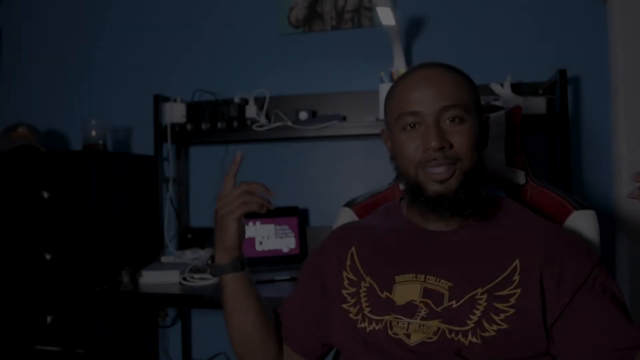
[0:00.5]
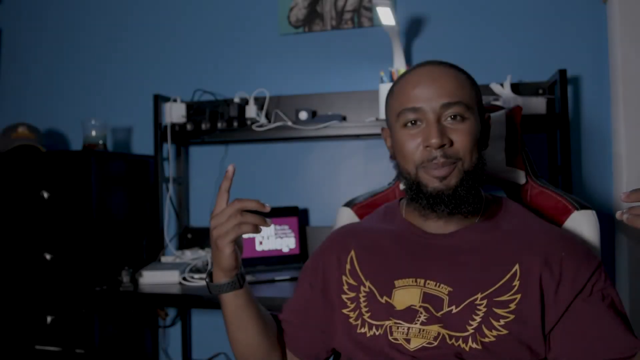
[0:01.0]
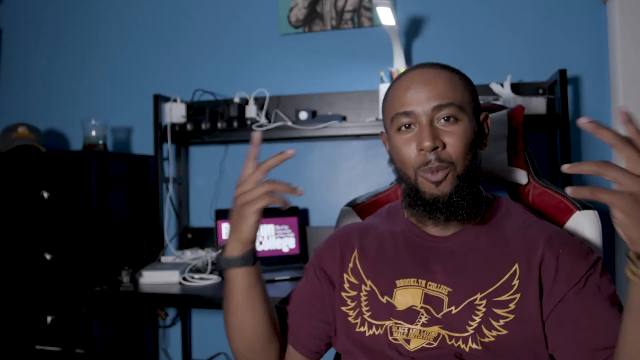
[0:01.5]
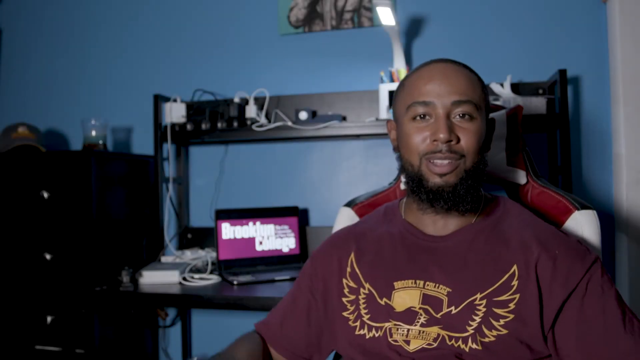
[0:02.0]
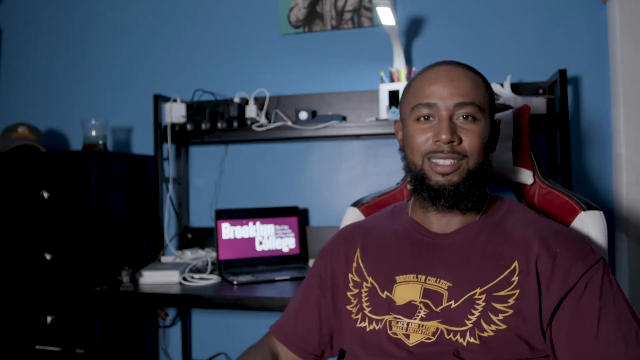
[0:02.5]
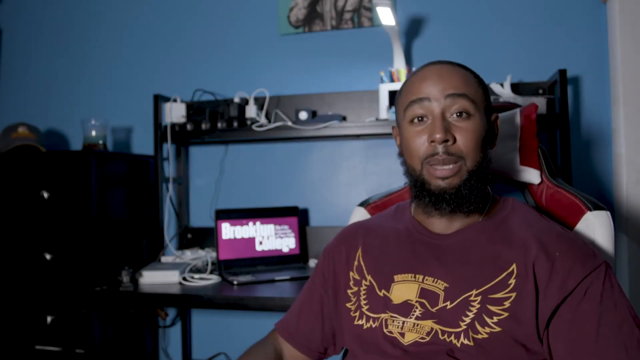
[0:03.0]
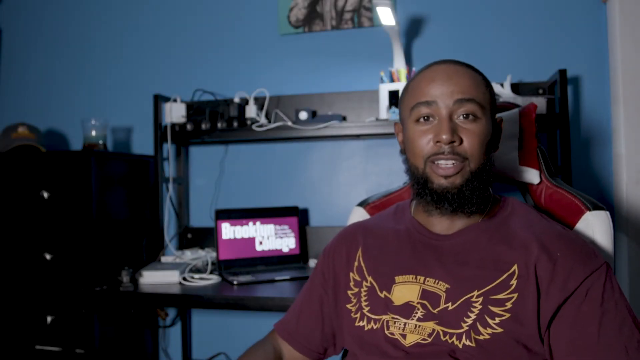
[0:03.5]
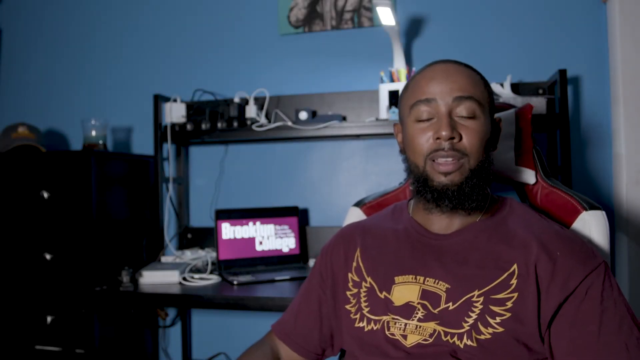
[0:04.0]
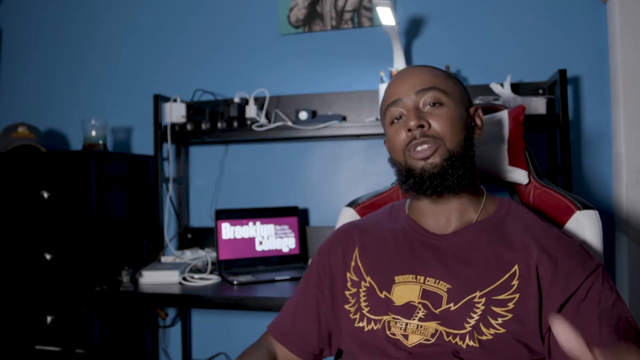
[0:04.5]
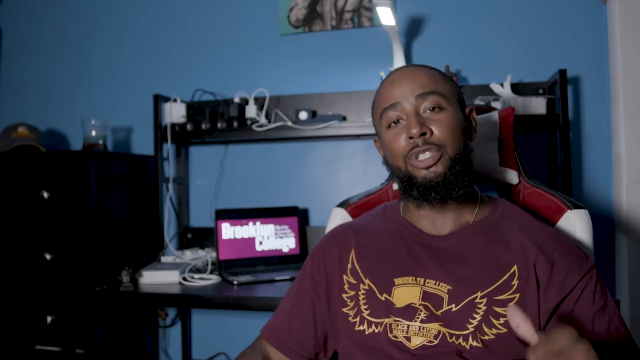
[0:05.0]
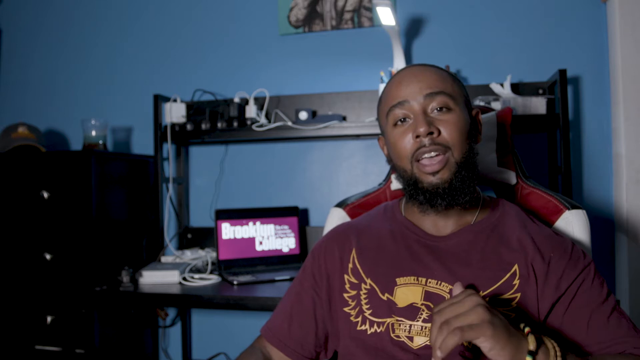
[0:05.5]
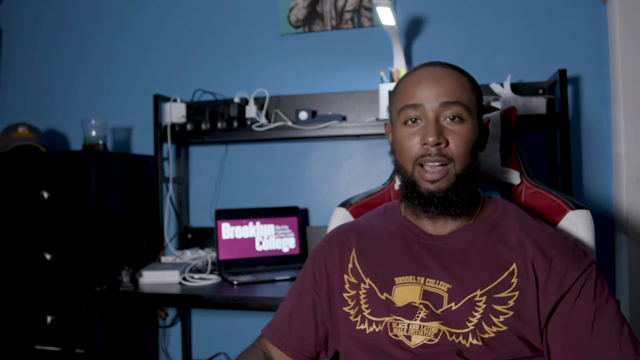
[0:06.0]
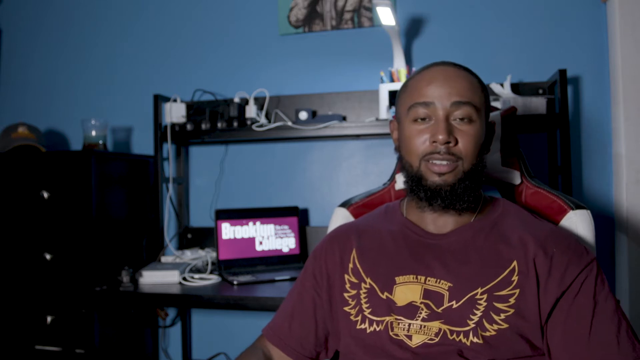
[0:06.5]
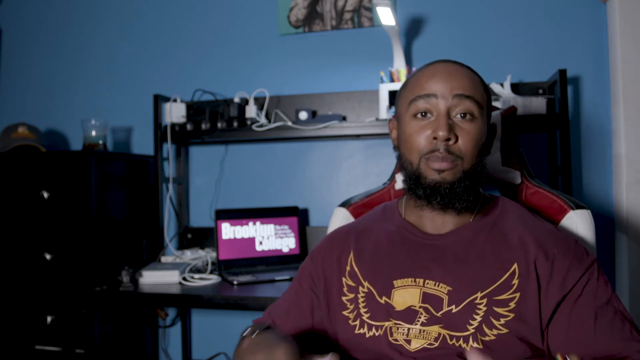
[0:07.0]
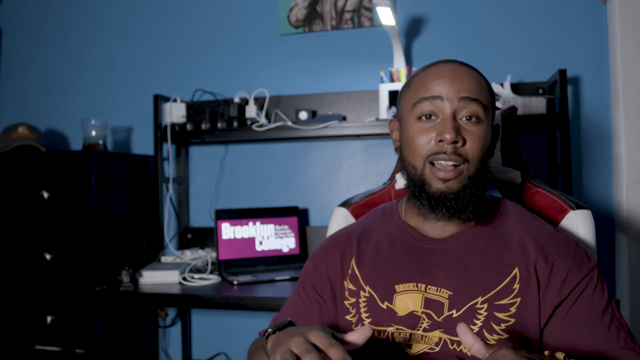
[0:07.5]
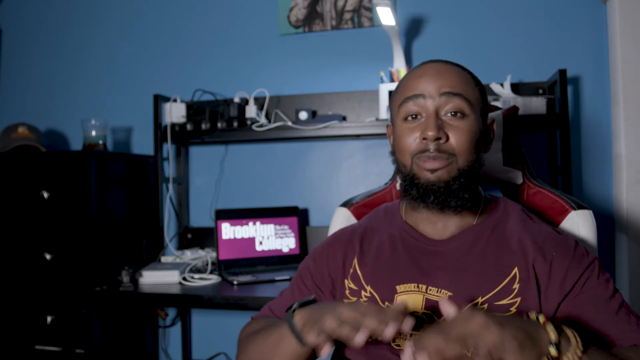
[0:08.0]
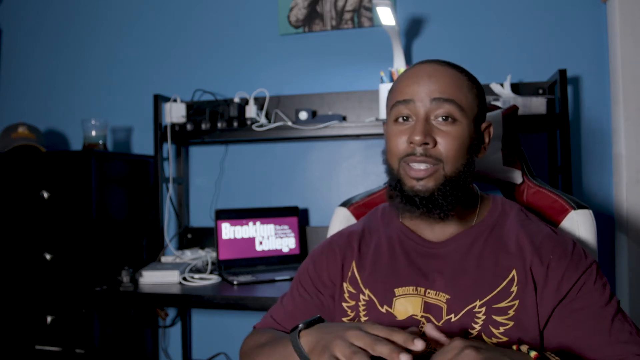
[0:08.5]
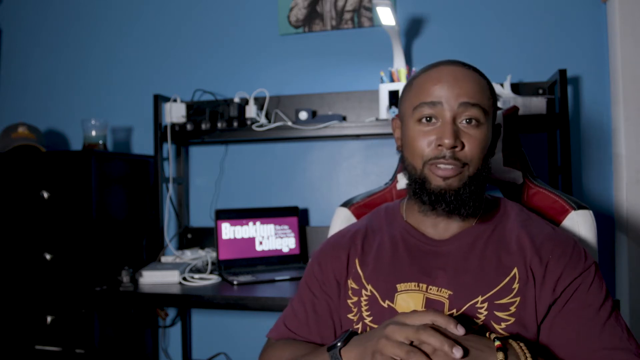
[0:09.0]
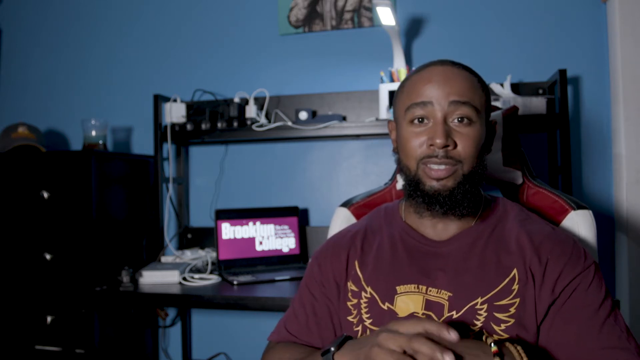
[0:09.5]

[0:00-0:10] At the very beginning, a man appears to be giving an introductory-style speech. He is off to the right of the frame, sitting in a chair that looks black, red, and white. In the background his laptop is open, showing very large text reading "Brooklyn College" on a maroon background or wallpaper. The man seems very chill and laid back; he has a black beard, wears a maroon shirt, and looks pretty buff.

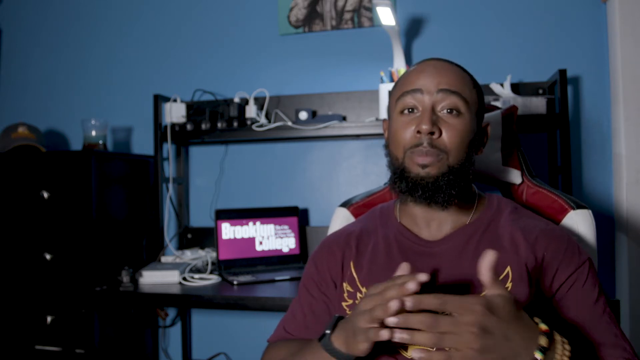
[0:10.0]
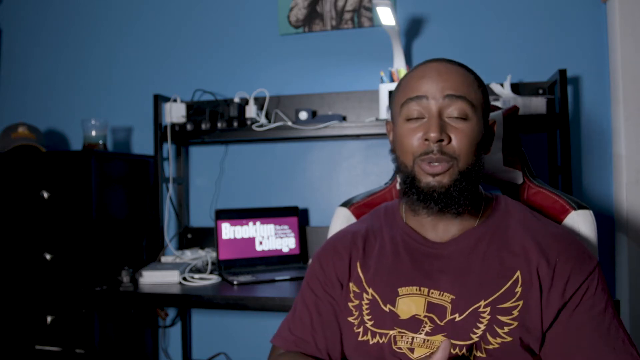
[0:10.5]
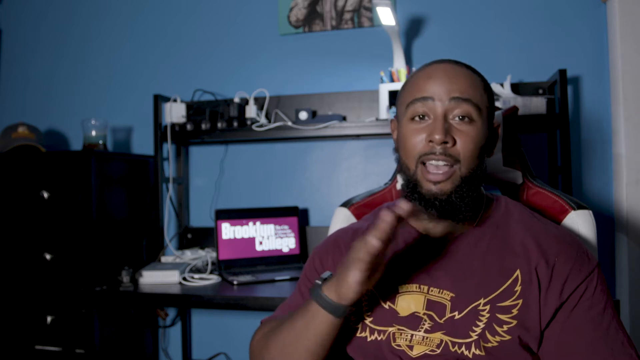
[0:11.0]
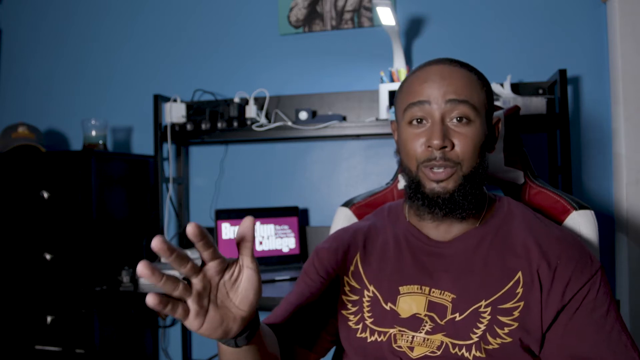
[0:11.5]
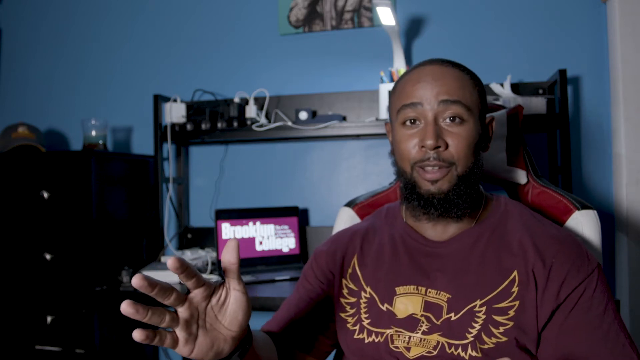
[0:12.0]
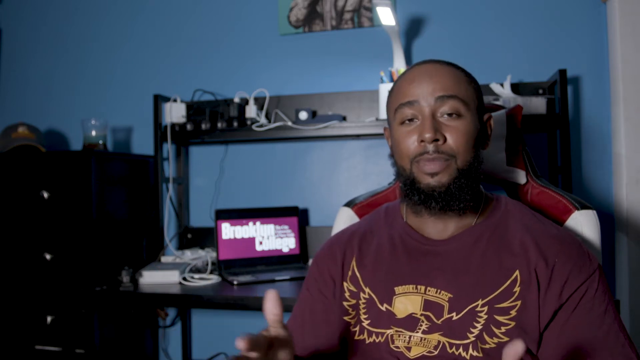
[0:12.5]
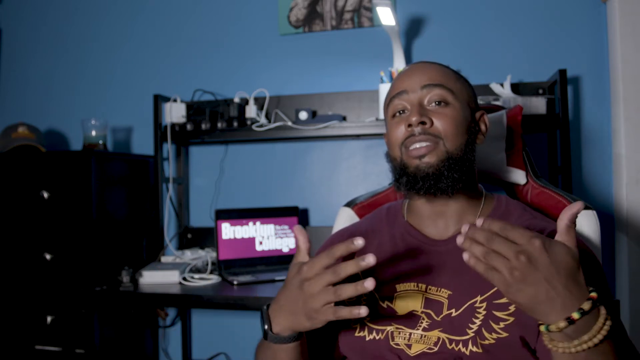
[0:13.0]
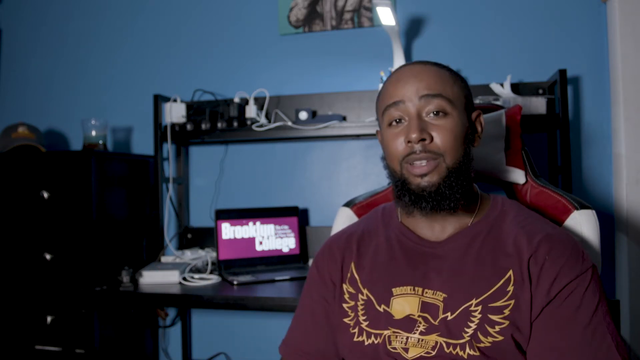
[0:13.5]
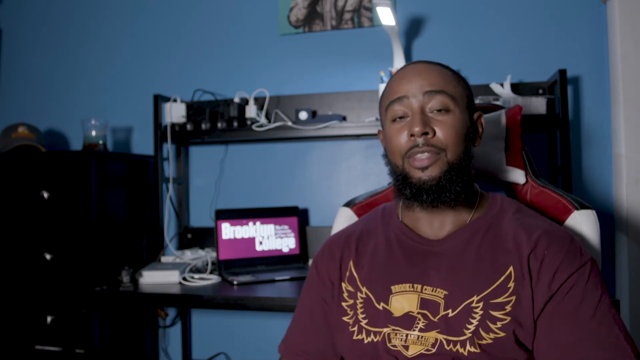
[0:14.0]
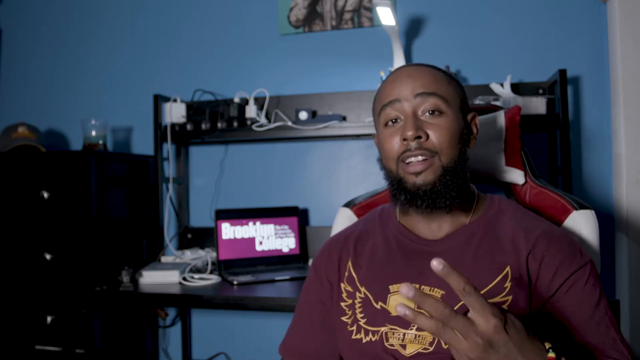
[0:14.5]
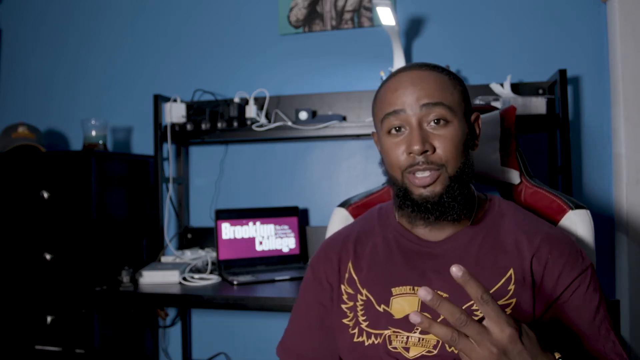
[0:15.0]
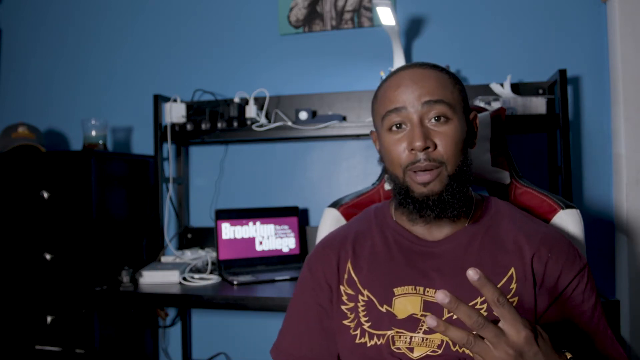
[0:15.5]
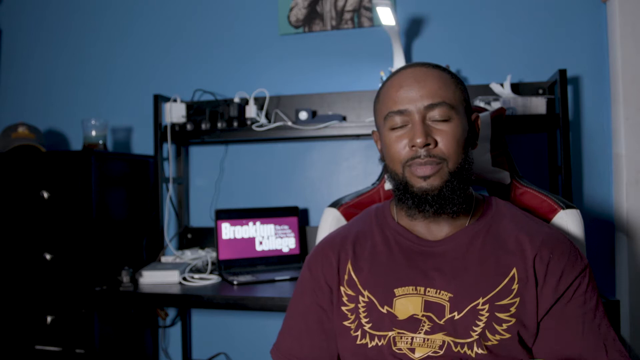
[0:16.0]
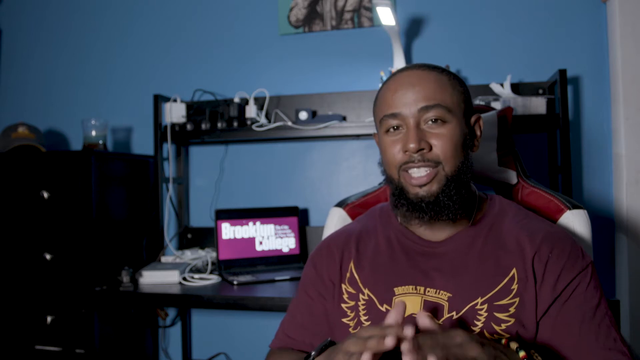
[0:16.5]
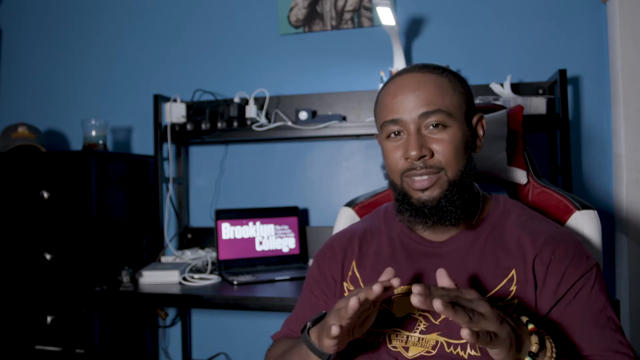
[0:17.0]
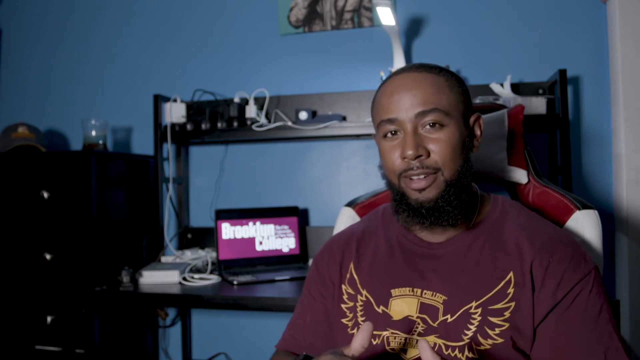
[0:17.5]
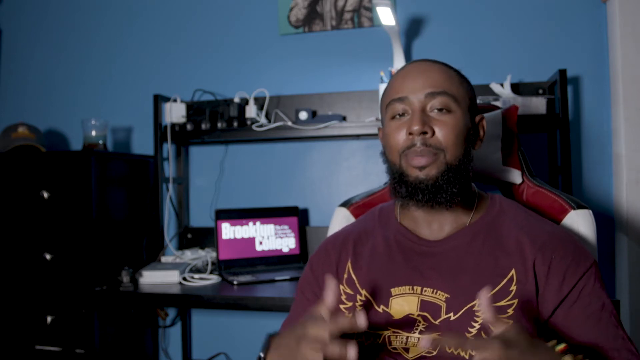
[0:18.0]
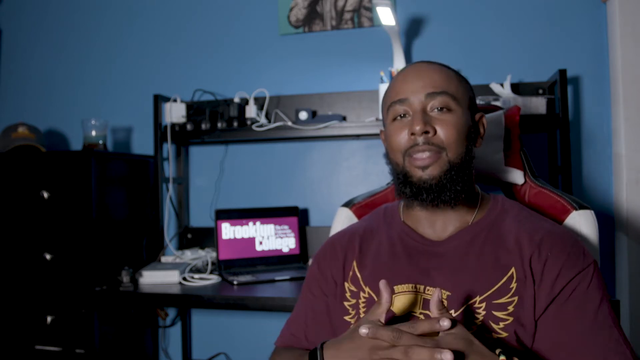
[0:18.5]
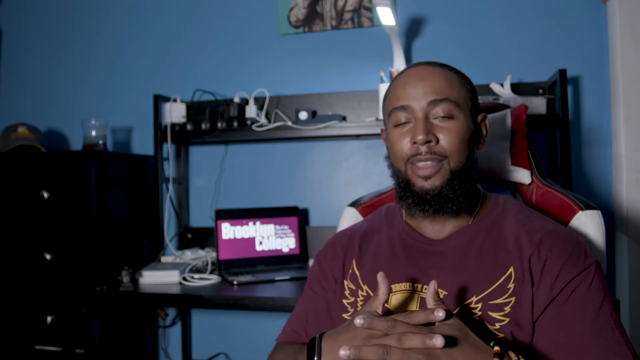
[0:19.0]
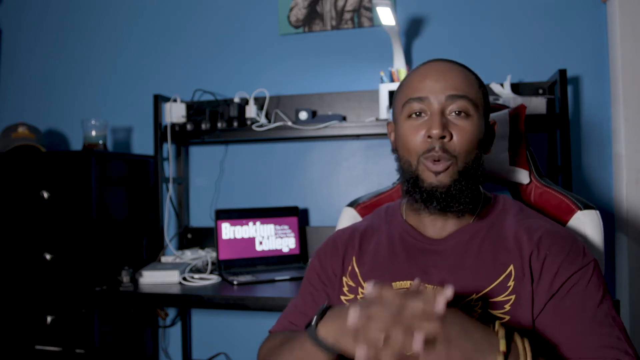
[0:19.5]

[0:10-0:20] The same man continues to talk. He makes a hand gesture with his right hand, reaching out a bit to the left, and brings both hands together in a sort of scissoring fashion as he keeps talking.